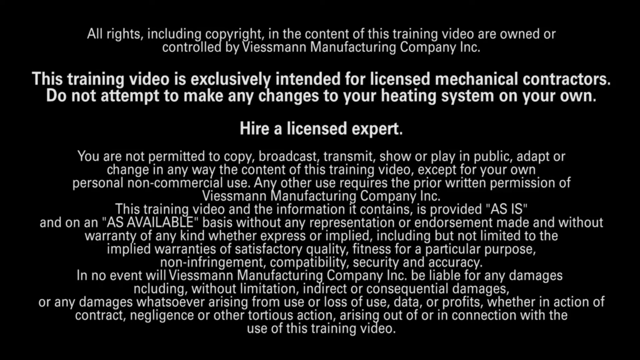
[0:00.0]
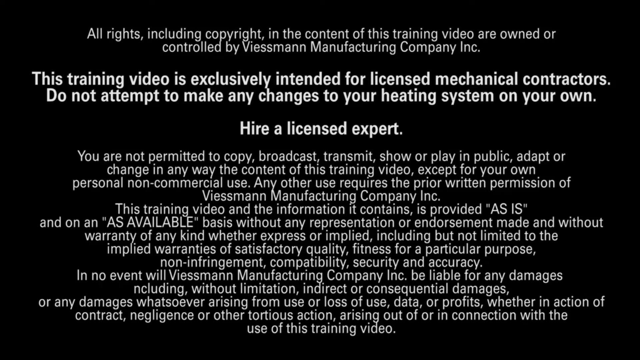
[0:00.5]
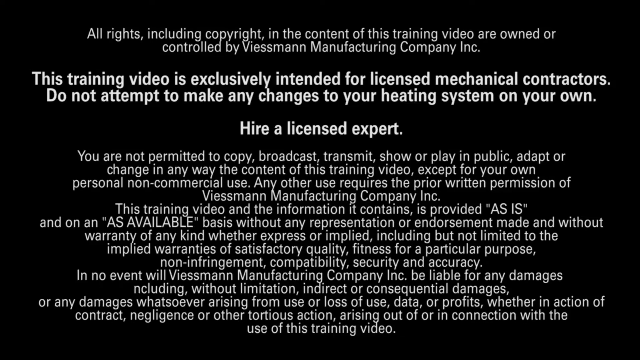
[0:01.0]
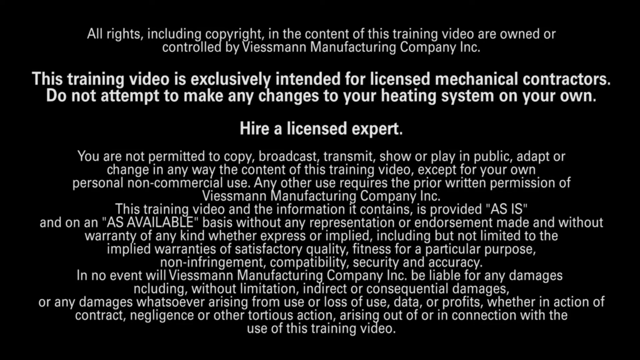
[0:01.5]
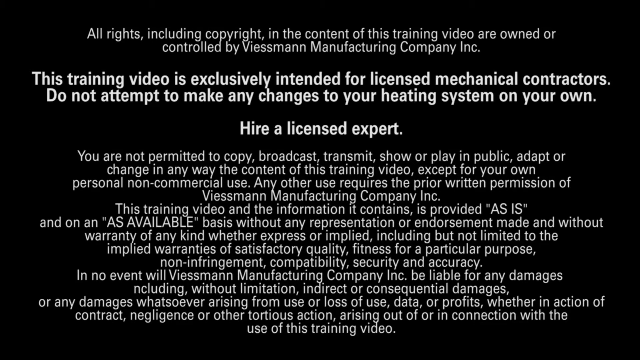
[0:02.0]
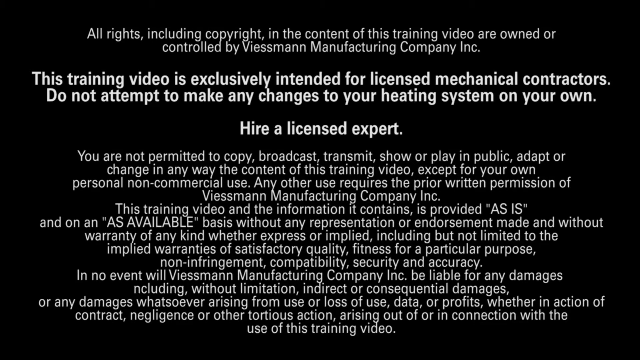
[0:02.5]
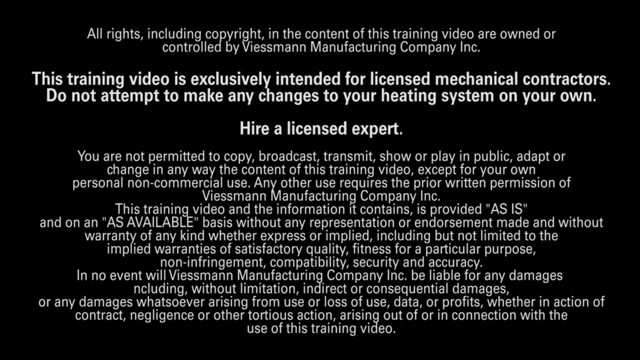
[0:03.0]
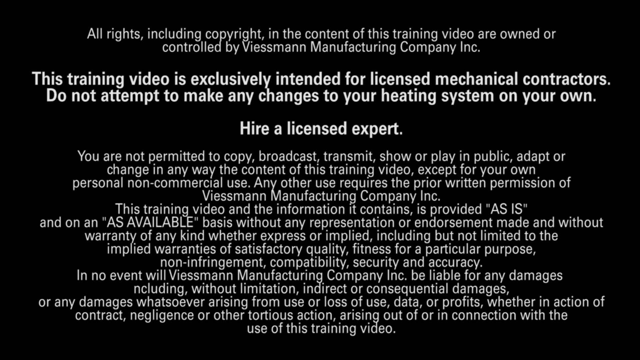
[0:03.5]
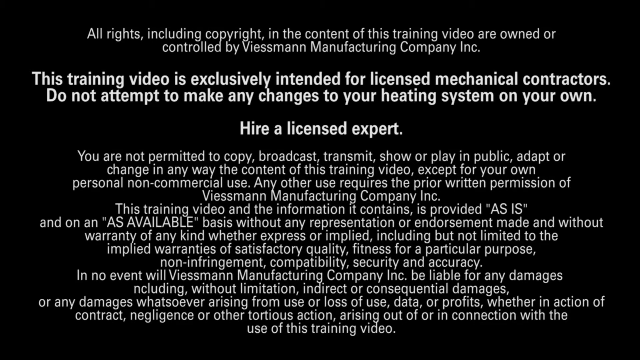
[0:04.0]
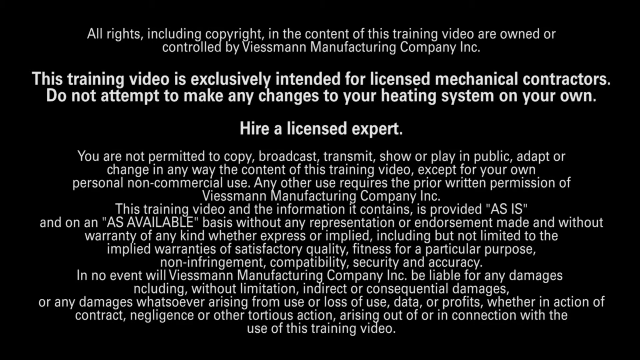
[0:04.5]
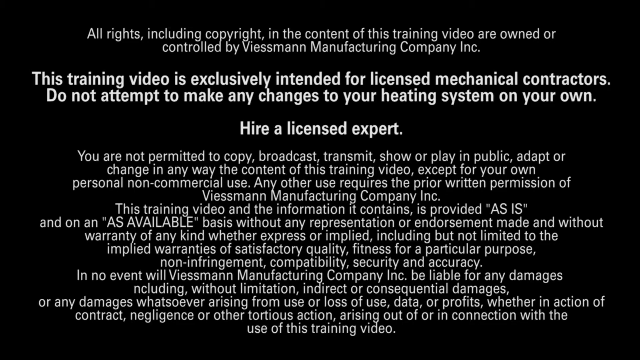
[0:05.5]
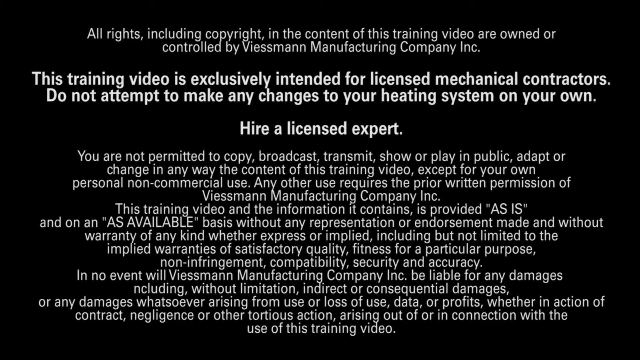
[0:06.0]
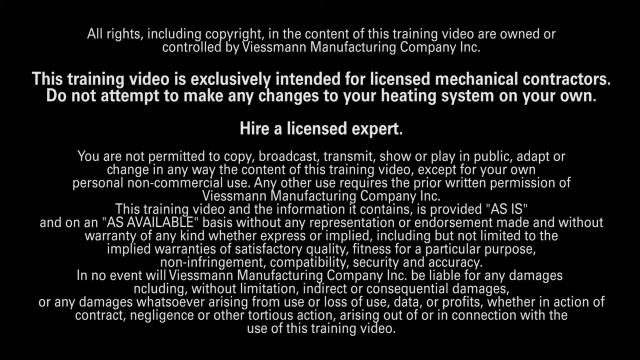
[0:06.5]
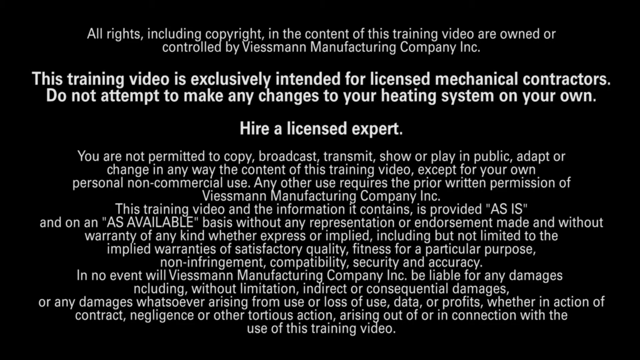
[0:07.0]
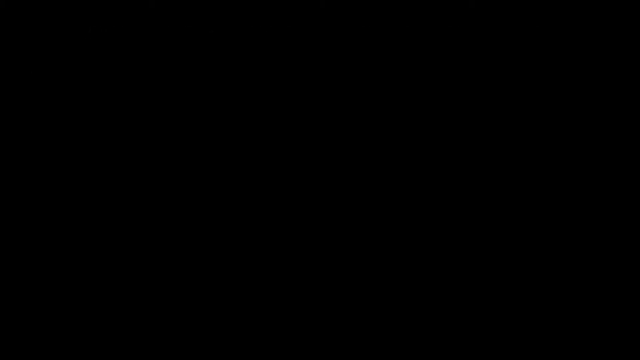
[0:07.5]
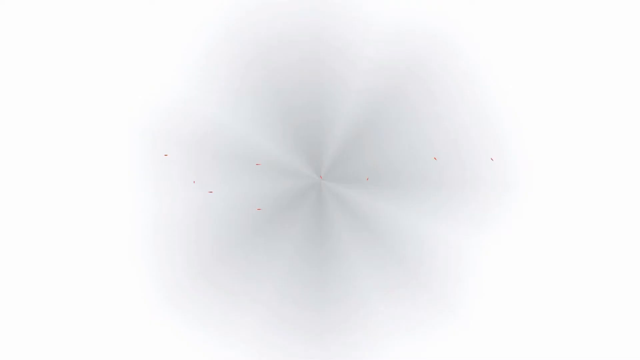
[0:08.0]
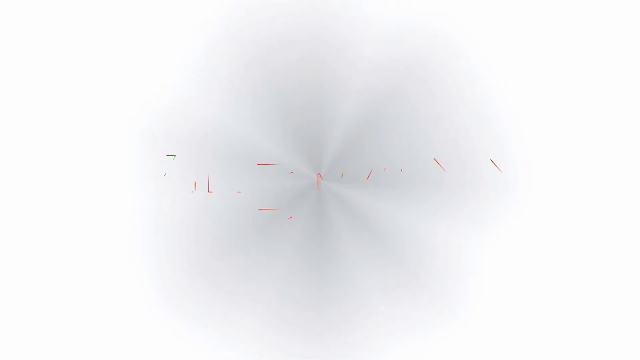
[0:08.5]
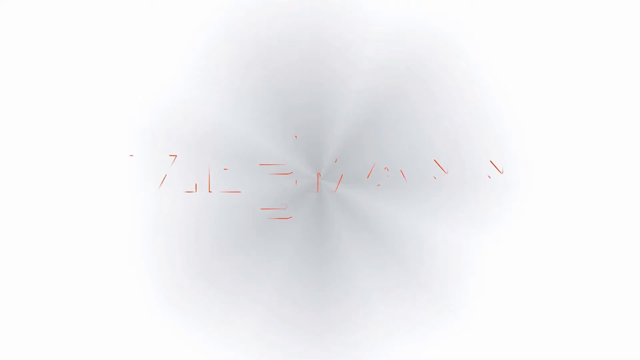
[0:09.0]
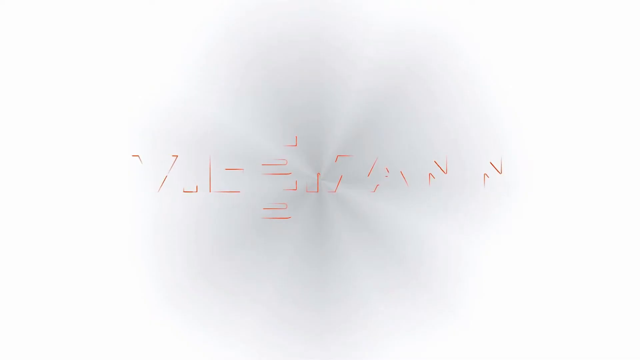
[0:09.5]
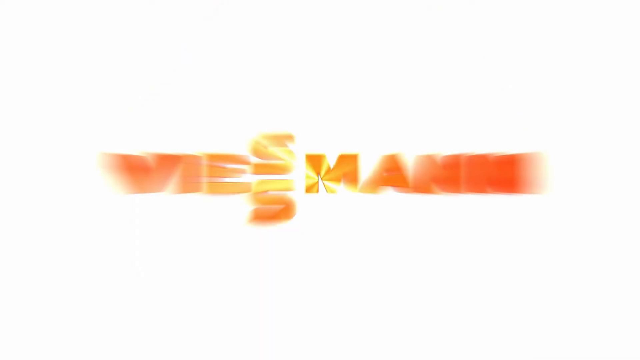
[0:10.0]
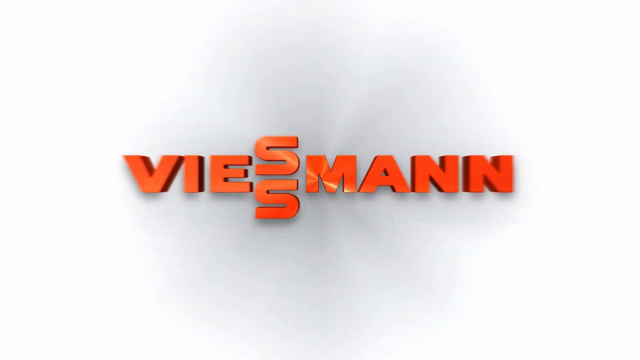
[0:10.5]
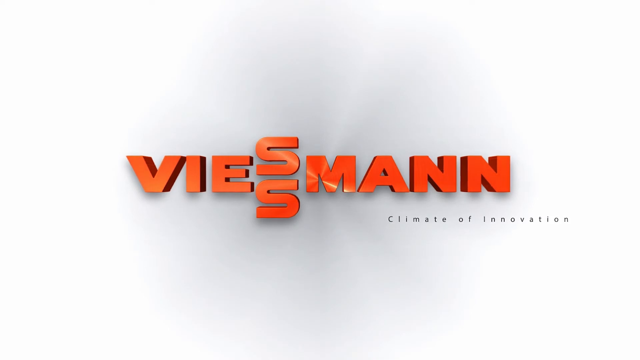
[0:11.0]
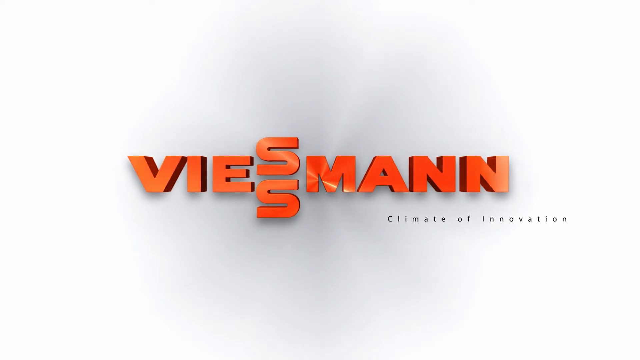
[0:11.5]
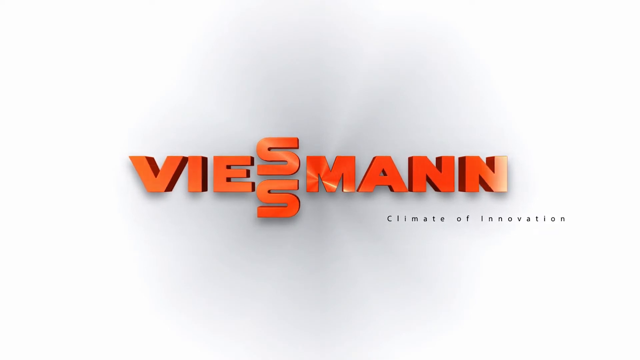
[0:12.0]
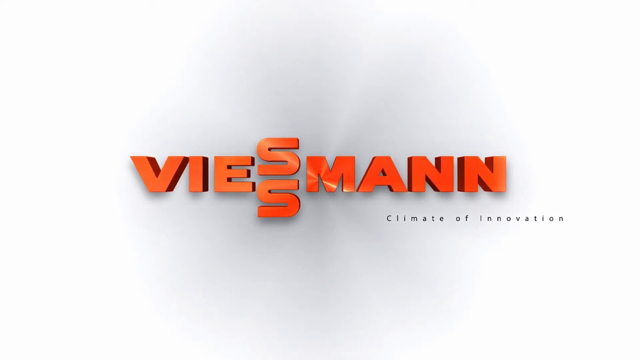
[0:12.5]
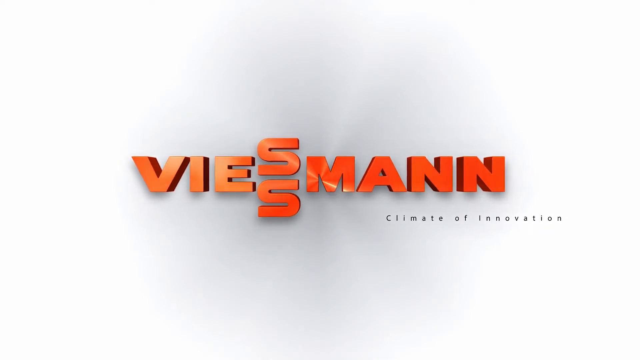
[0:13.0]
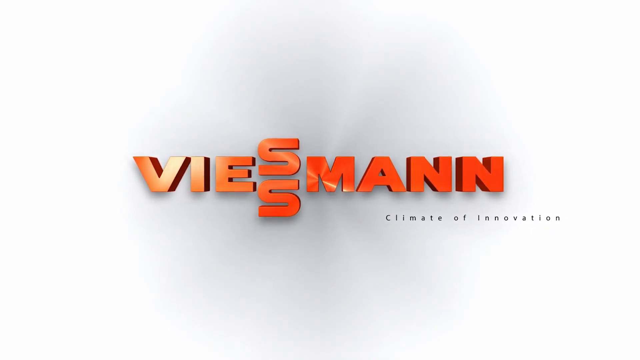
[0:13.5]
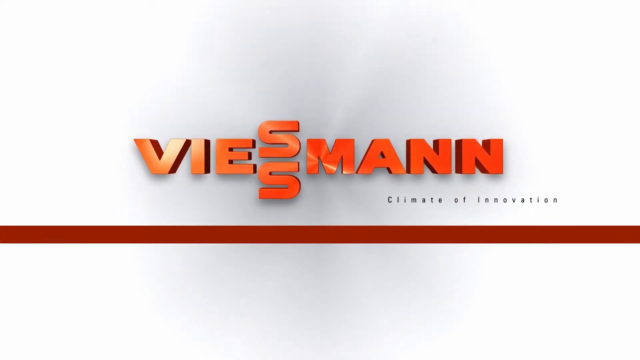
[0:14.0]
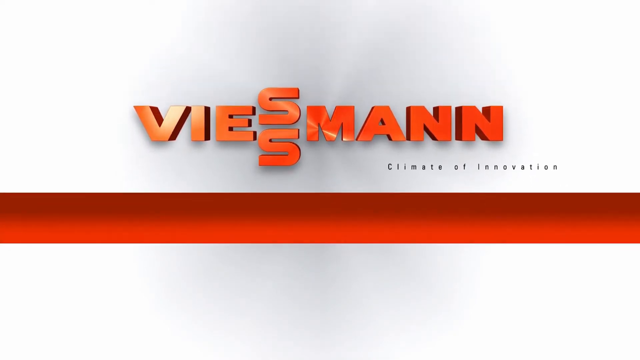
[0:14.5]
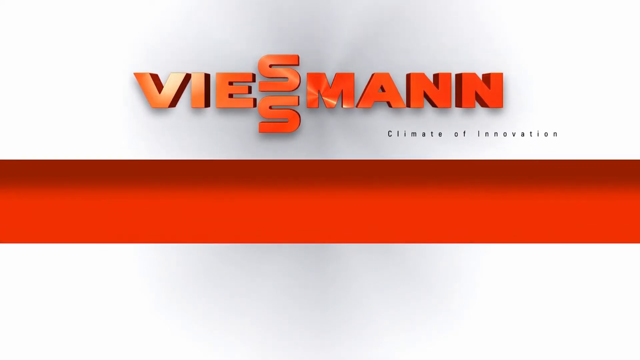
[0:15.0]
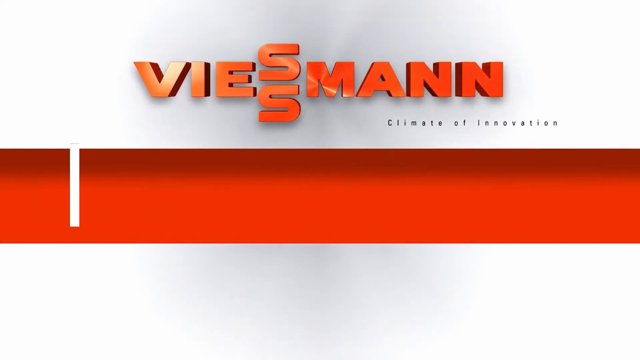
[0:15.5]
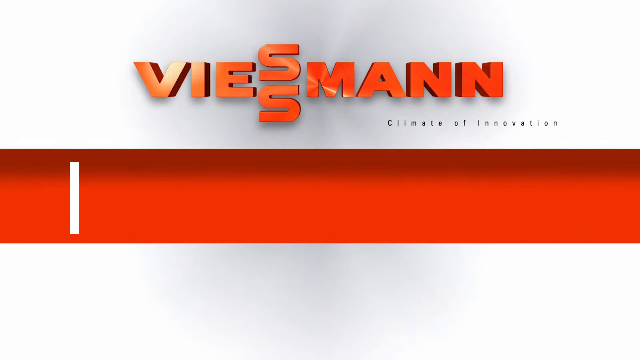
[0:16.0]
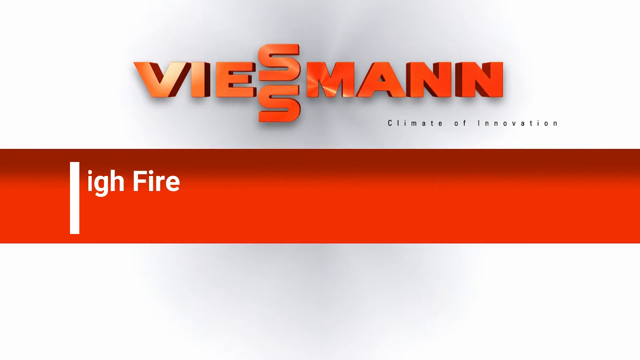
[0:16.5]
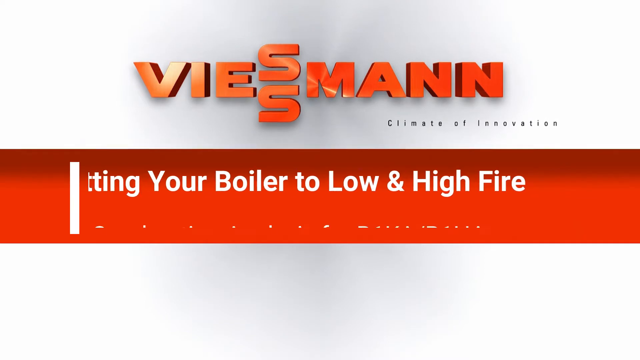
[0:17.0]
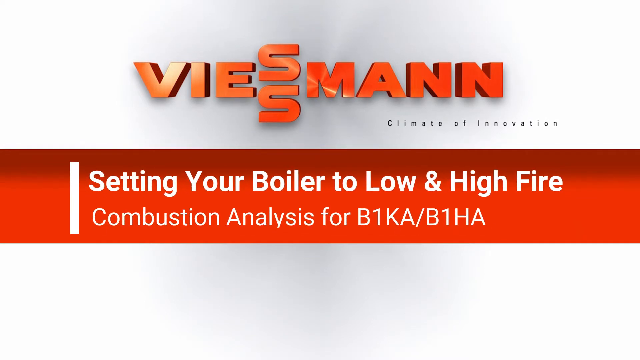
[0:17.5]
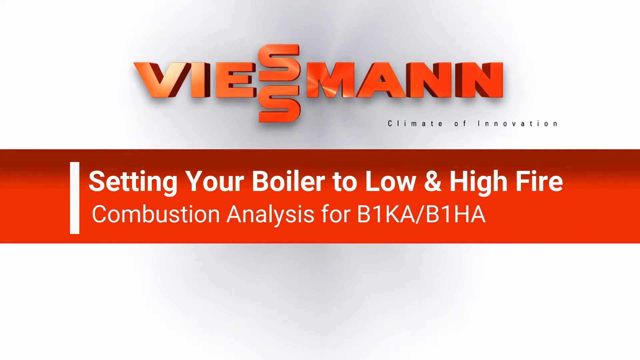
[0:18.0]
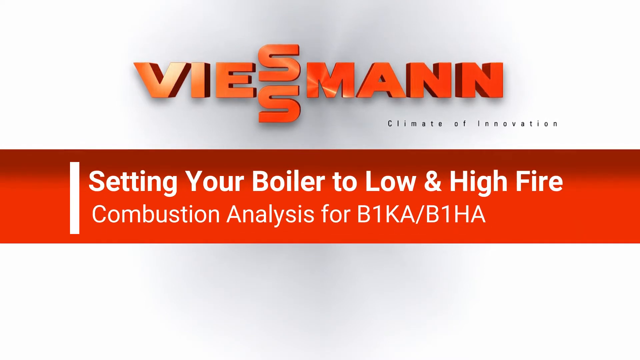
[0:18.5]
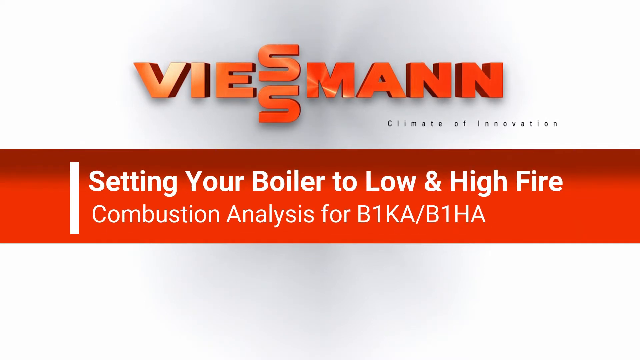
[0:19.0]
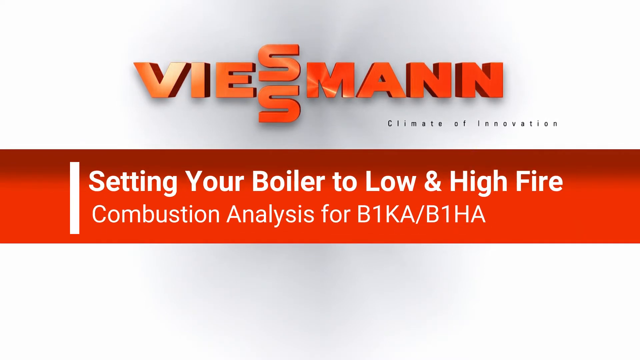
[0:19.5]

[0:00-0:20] A block of disclaimer text appears, stating that the rights to the content of this training video are owned or controlled by Wiesman Manufacturing Company, Inc. It reads in part: "This training video is exclusively intended for licensed mechanical contractors. Do not attempt to make any changes to your rating system on your own." The text goes on to restrict copying, broadcasting or adapting the video except for personal non-commercial use, states that the video is provided as-is without warranty, and limits the company's liability. Orange letters on a white background then read "Climate of Innovation," followed by the title "Setting your boiler to low and high fire" and "Combustion analysis for B1KA, B1HA."